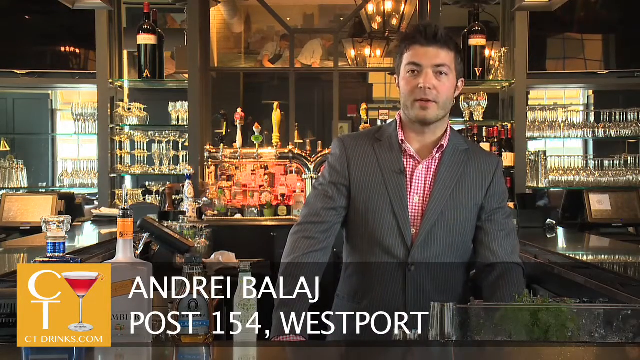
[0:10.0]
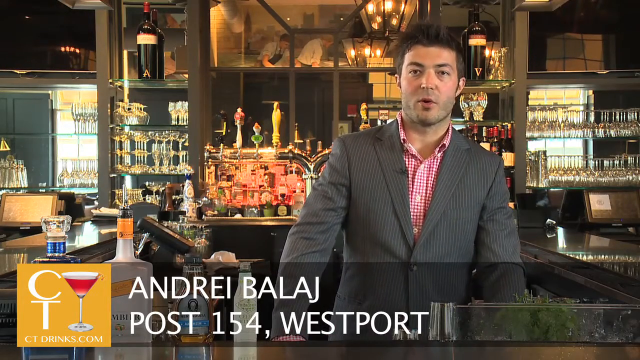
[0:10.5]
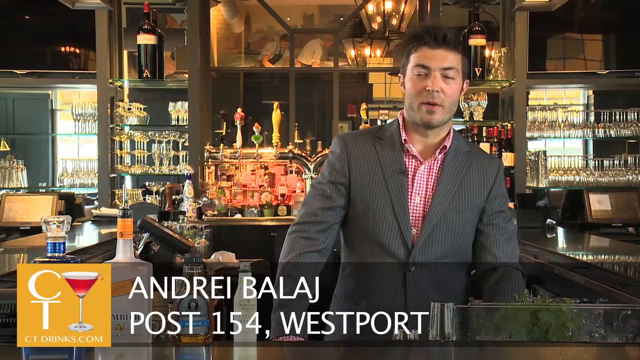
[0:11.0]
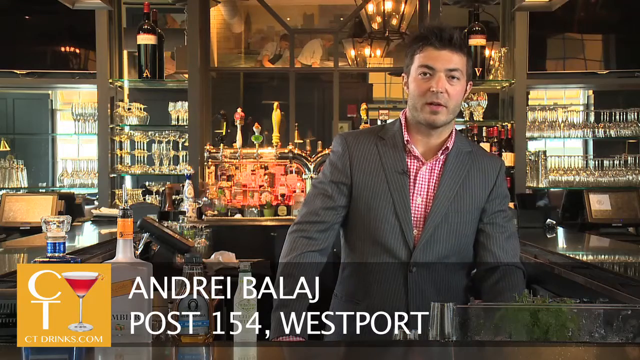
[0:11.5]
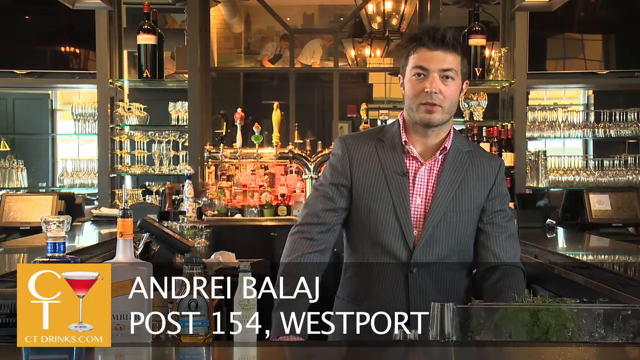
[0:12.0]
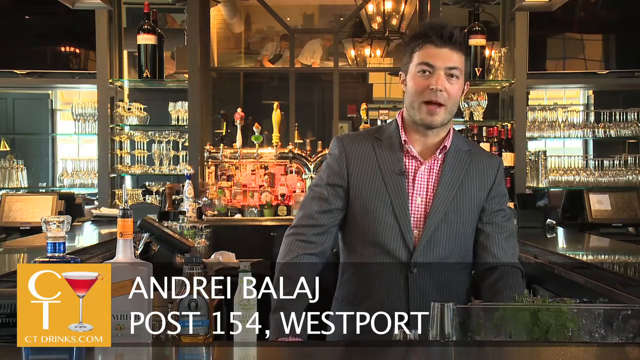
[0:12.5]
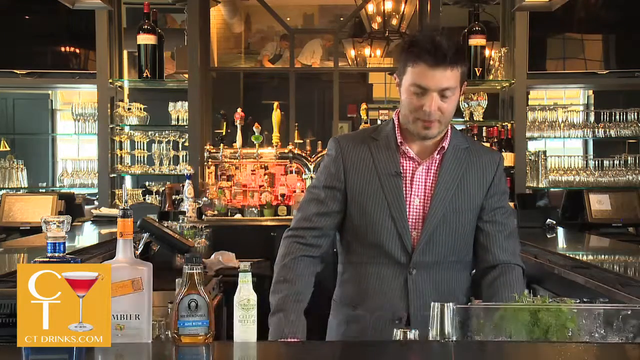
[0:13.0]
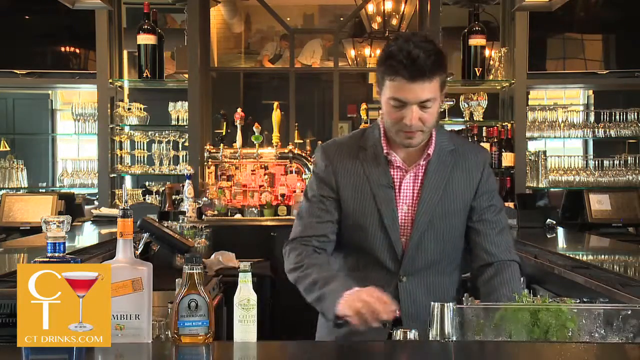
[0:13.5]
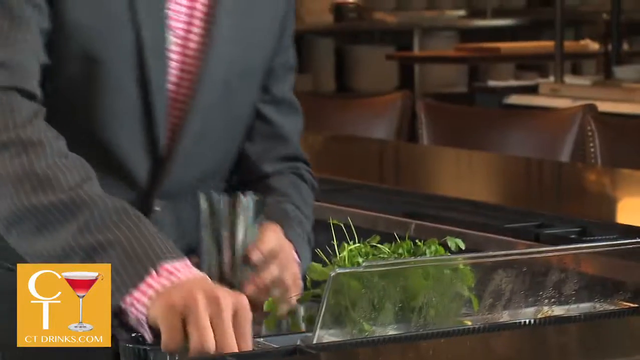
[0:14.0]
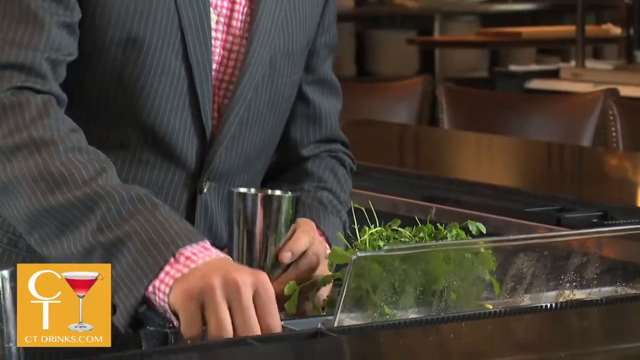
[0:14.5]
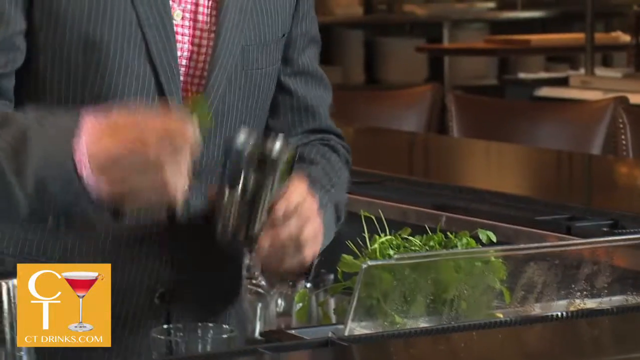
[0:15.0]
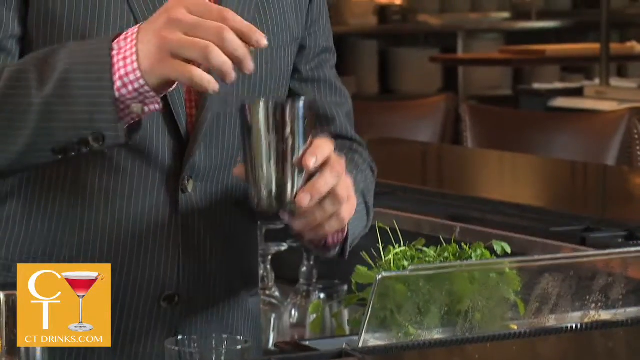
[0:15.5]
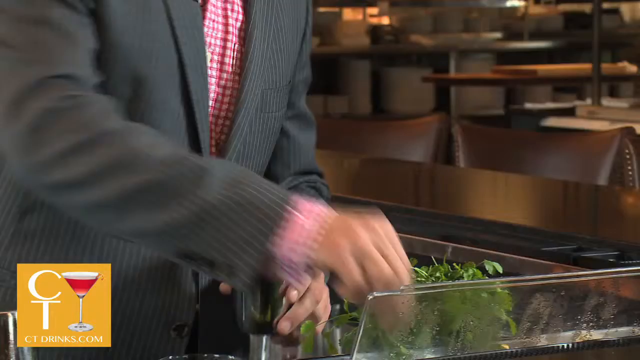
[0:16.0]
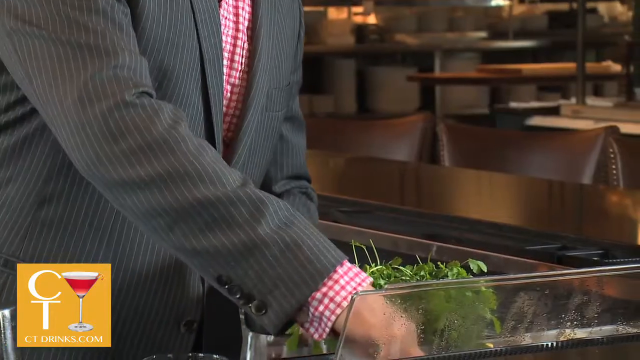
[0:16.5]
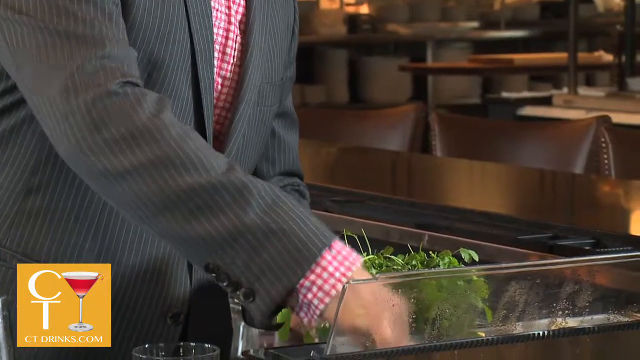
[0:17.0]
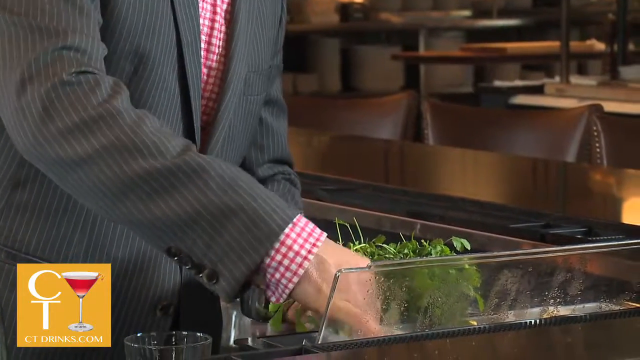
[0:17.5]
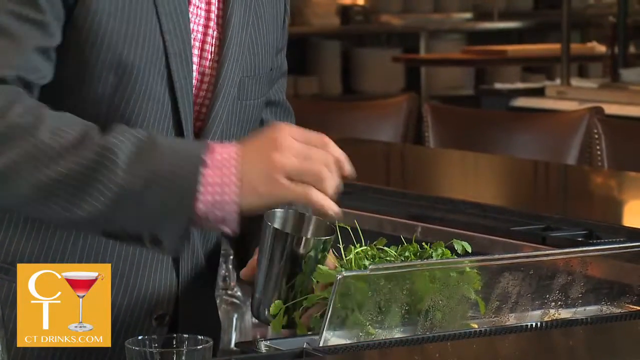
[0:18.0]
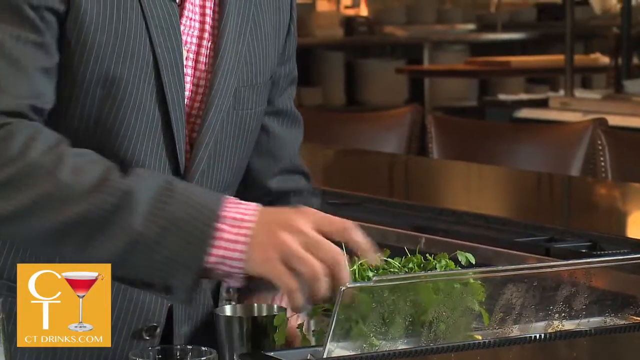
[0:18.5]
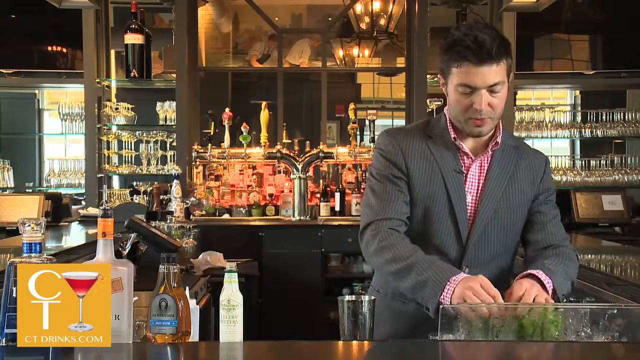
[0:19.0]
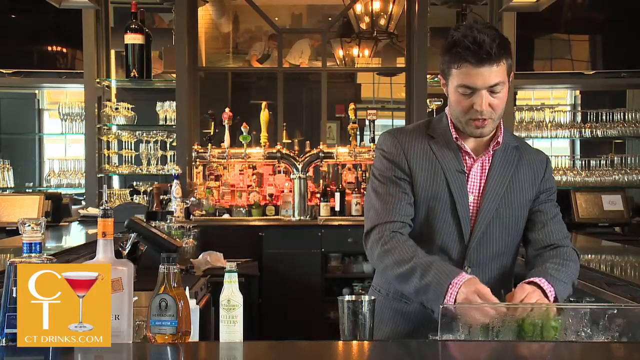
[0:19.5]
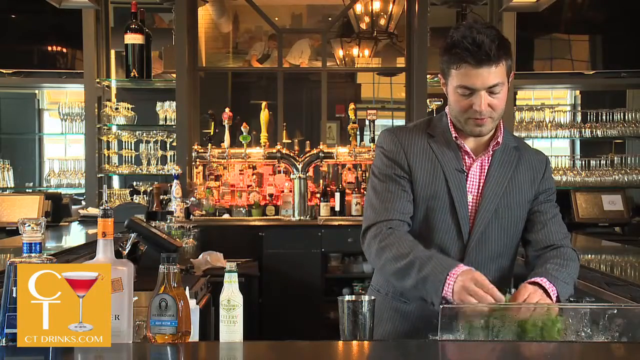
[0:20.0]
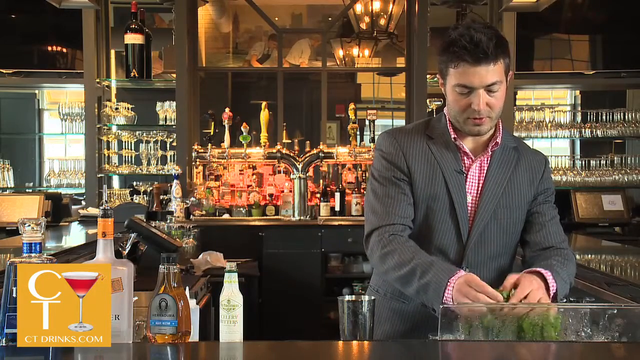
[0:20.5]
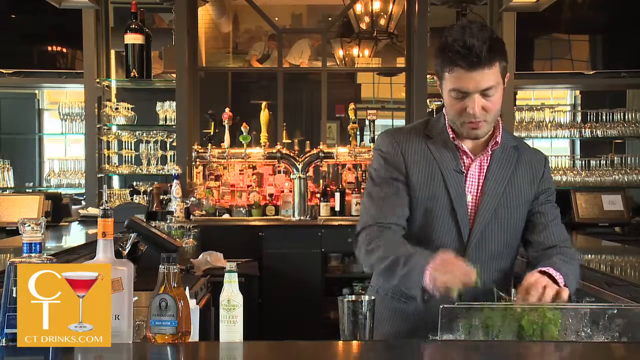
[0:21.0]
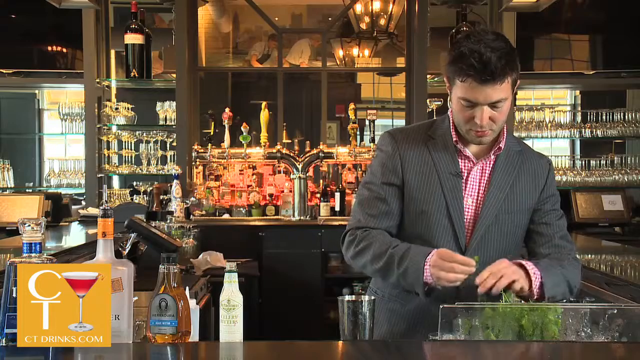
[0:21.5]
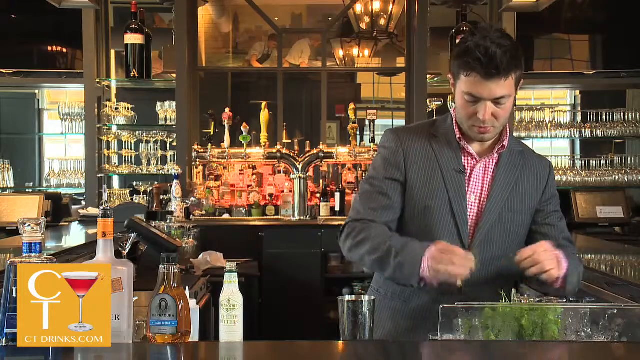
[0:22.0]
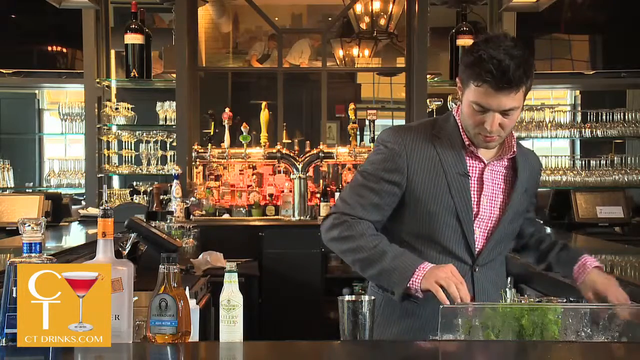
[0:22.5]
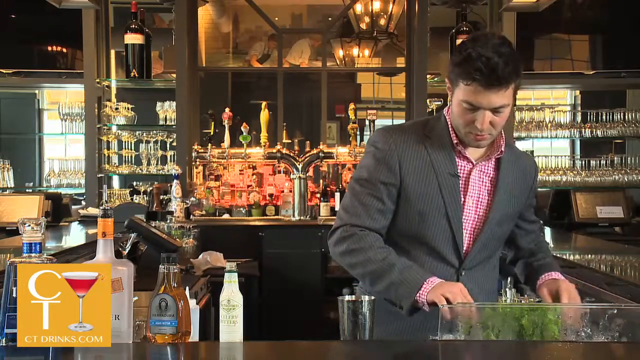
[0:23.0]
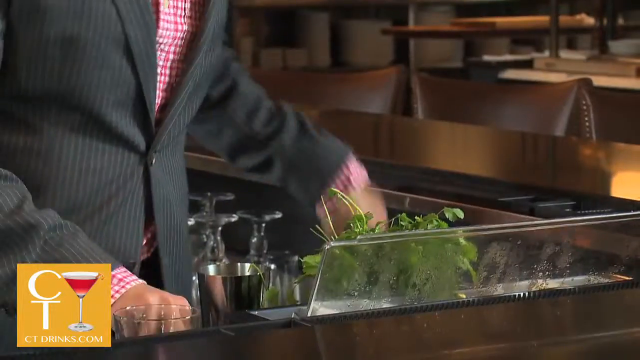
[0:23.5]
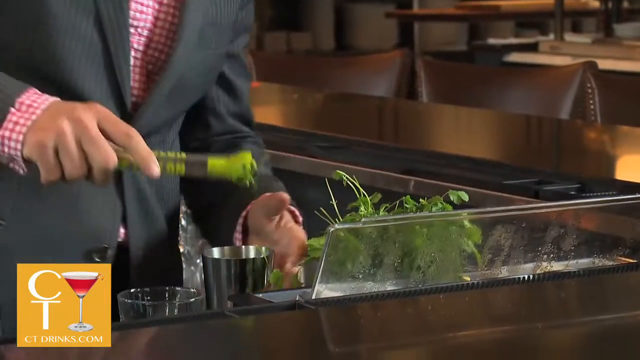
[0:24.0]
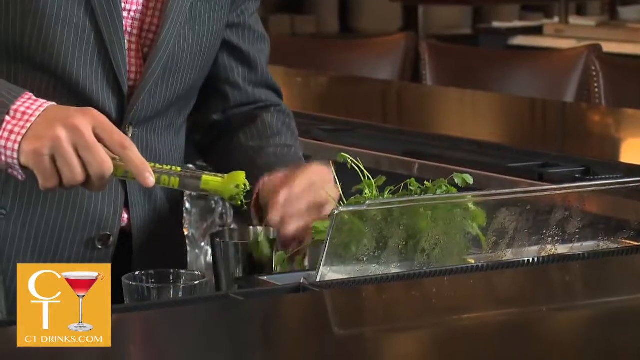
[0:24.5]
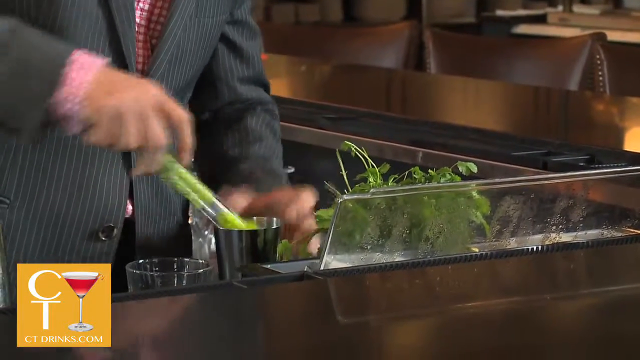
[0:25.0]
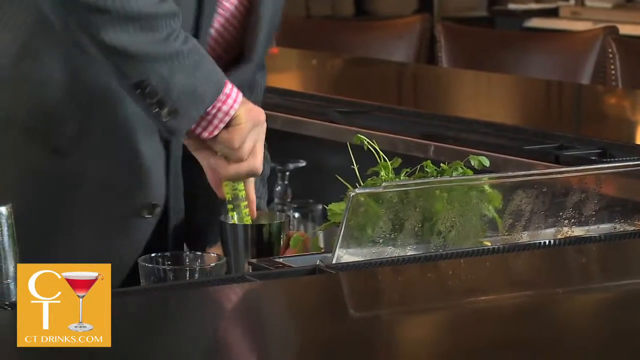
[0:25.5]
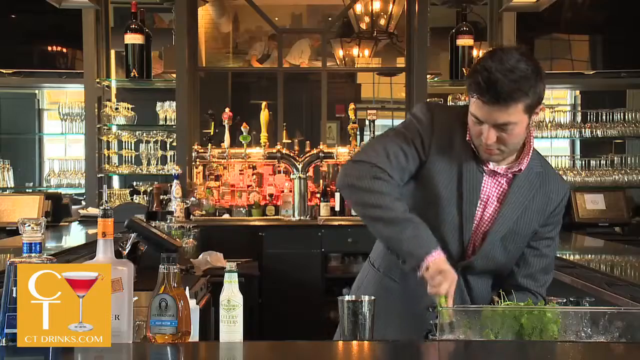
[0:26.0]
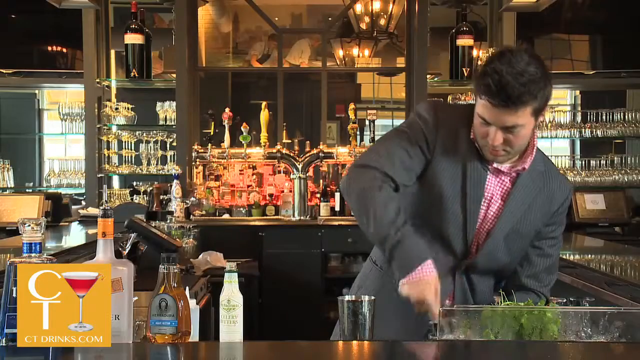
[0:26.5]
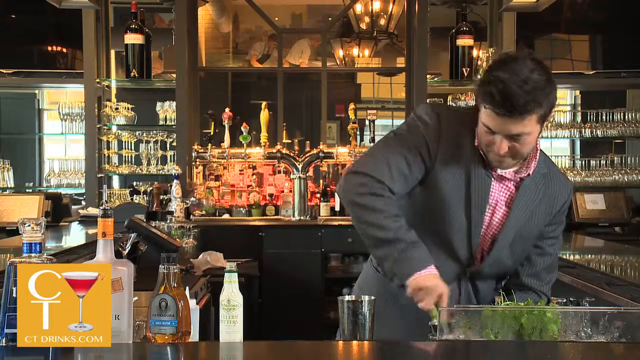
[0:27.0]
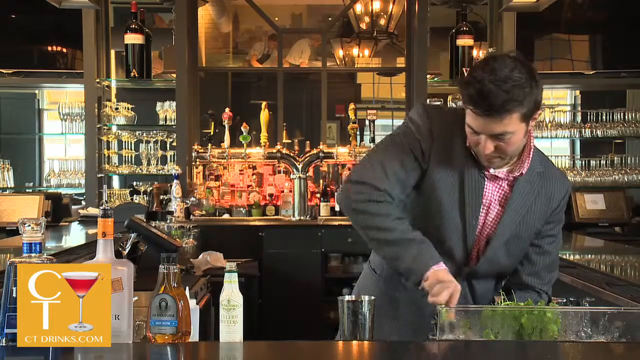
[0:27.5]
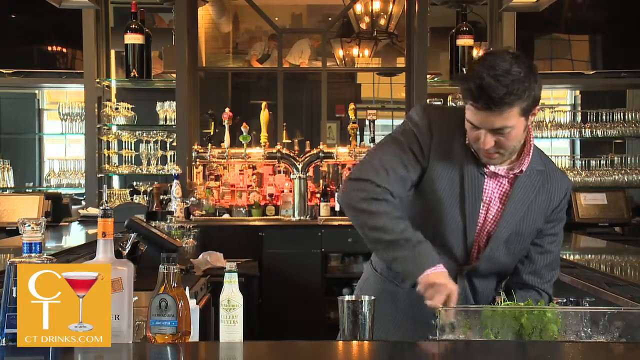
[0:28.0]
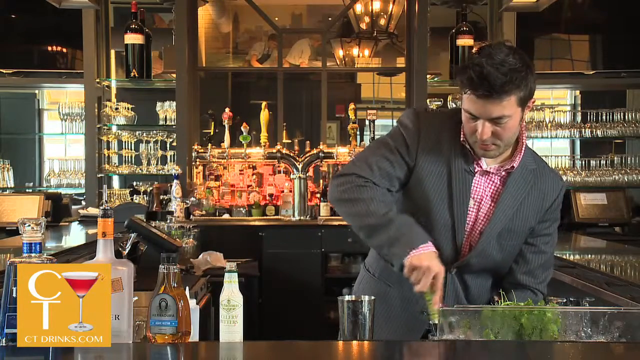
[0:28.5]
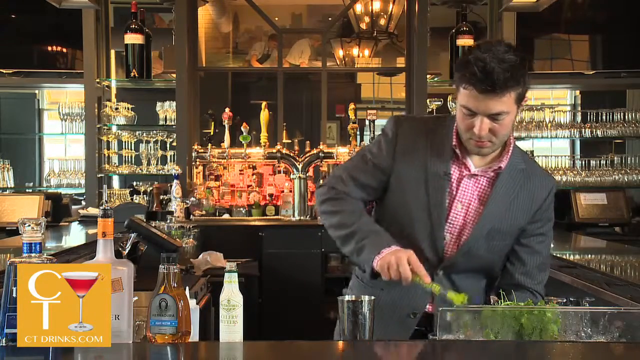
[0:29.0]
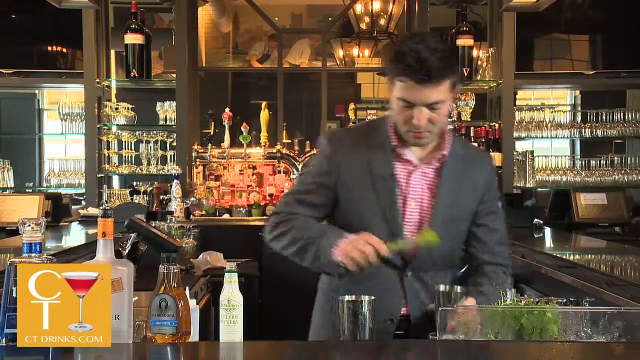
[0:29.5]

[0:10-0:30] A man identified as Andrei Balaj from Post 154 Westport is standing behind a bar. Behind him is a very ornate mirrored or glass wall with drink glasses lined up on glass shelves, and what looks like bottles of liquor. He wears a gray jacket with white pinstripes and a red and white checked shirt. On the left of the screen, next to his name, is a logo showing a drink glass and the initials CT, with "CT Drinks.com" below it. He speaks to the camera and then begins to make a drink in a metal drink shaker. He pulls off pieces of cilantro and puts them into the cup, then smashes and mashes them around. Bottles of liquor are standing on the counter next to him, and the cilantro is directly in front of him in a metal container next to the metal shaker cup he is using. A large light fixture is hanging just above him.